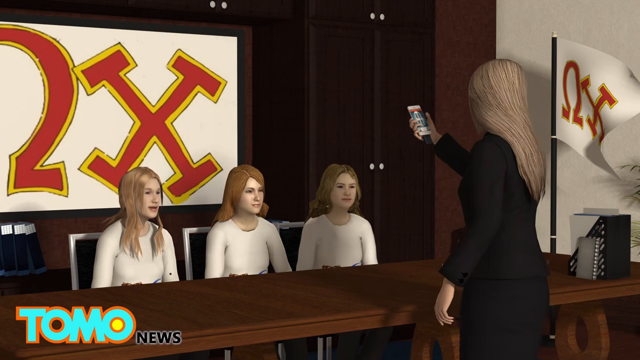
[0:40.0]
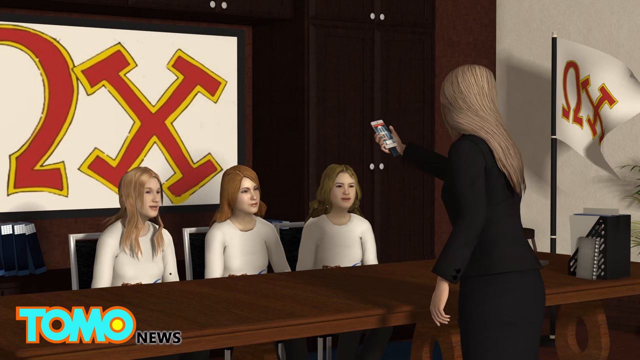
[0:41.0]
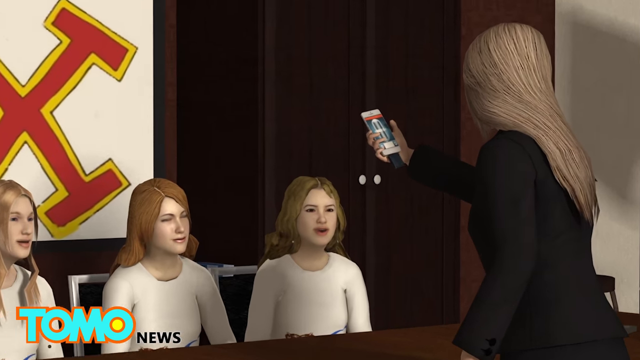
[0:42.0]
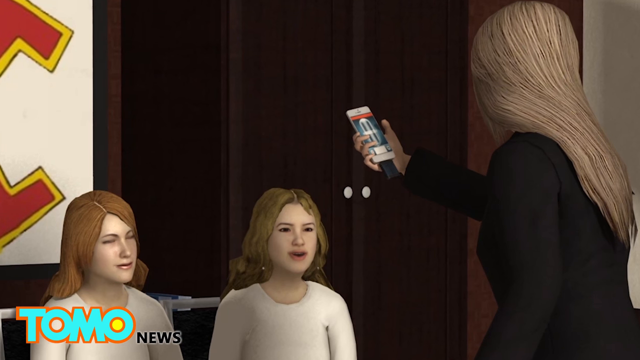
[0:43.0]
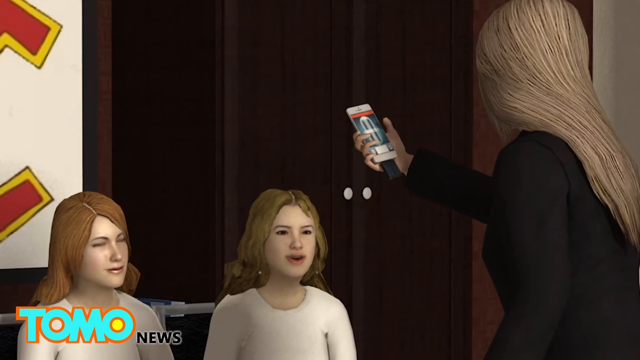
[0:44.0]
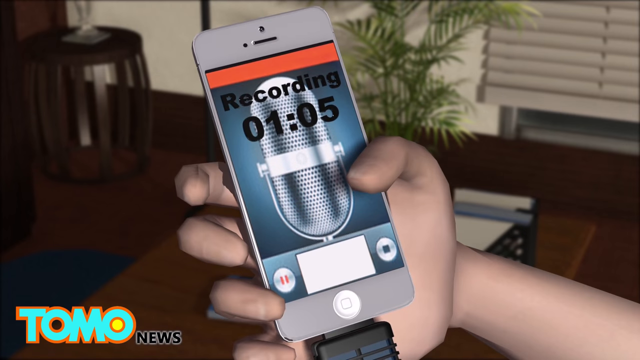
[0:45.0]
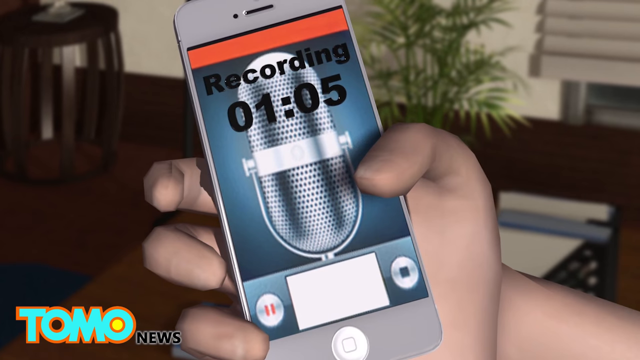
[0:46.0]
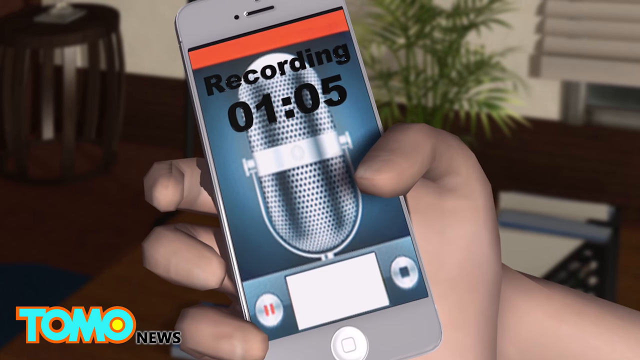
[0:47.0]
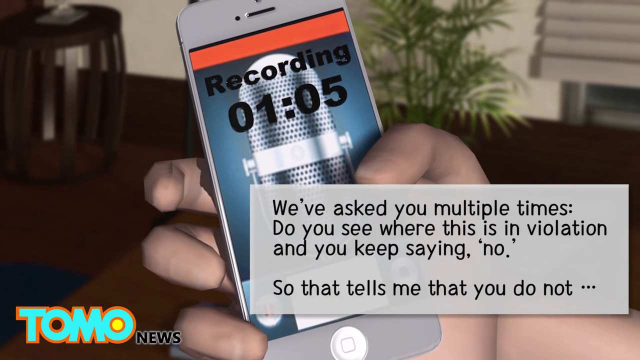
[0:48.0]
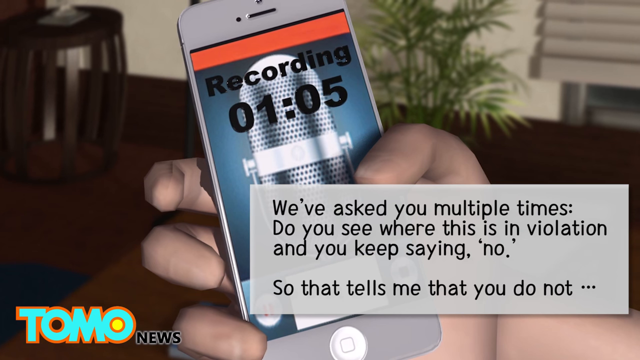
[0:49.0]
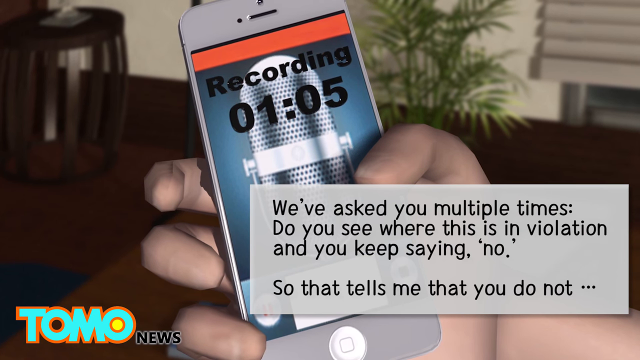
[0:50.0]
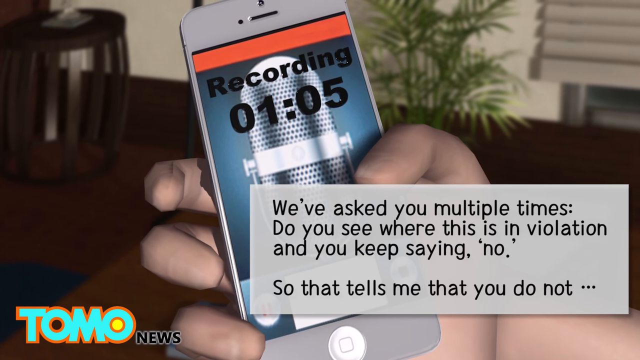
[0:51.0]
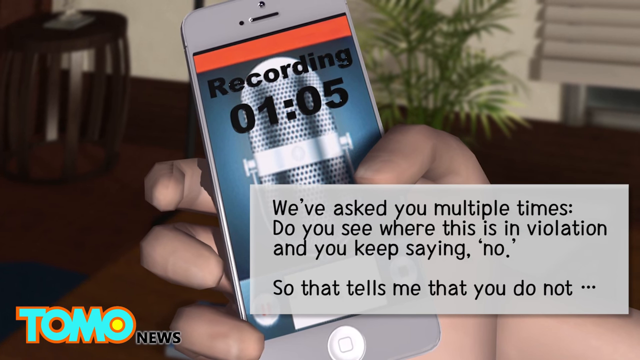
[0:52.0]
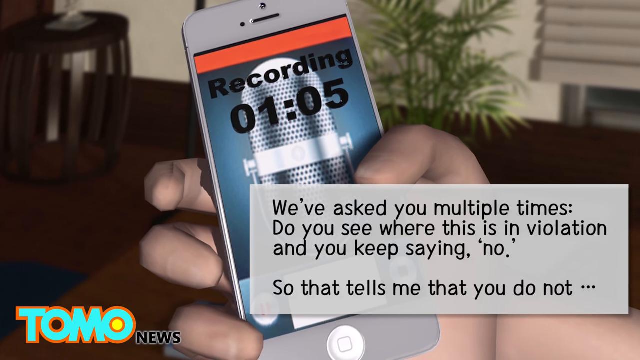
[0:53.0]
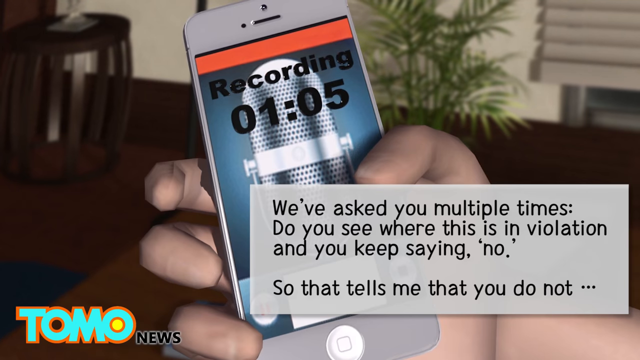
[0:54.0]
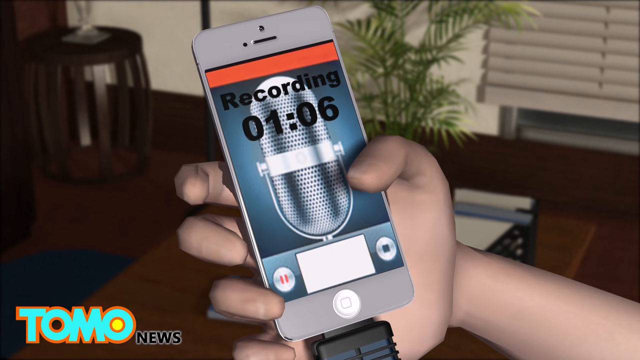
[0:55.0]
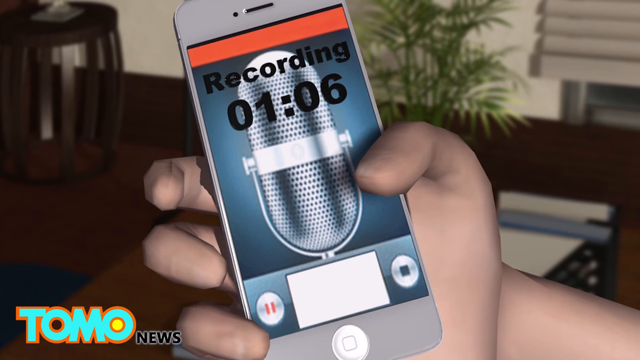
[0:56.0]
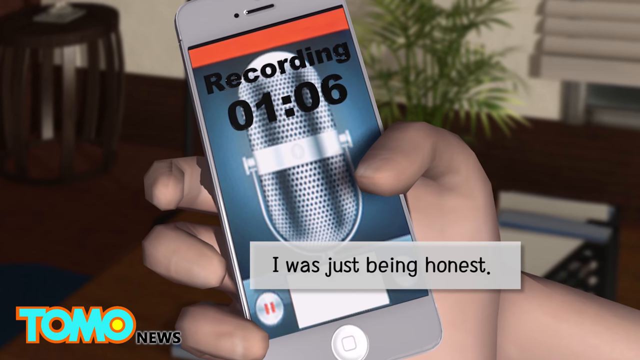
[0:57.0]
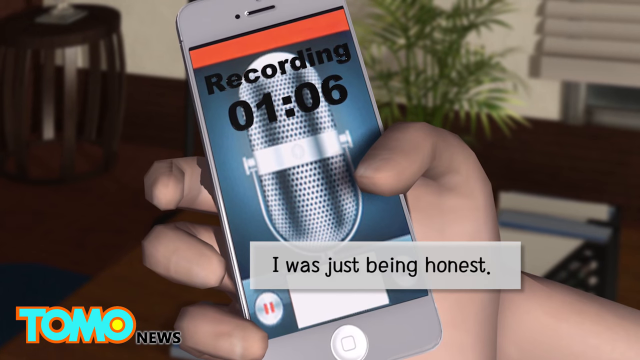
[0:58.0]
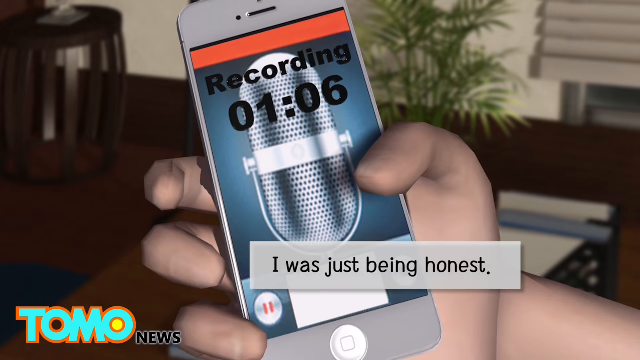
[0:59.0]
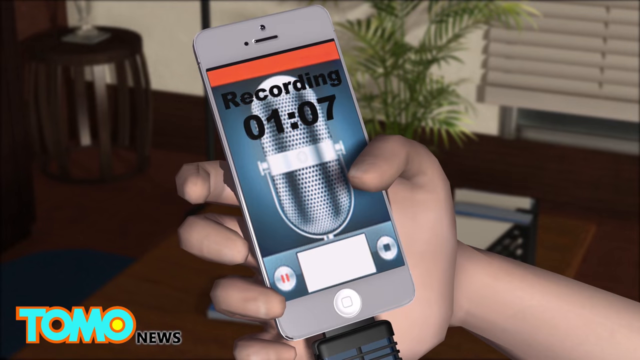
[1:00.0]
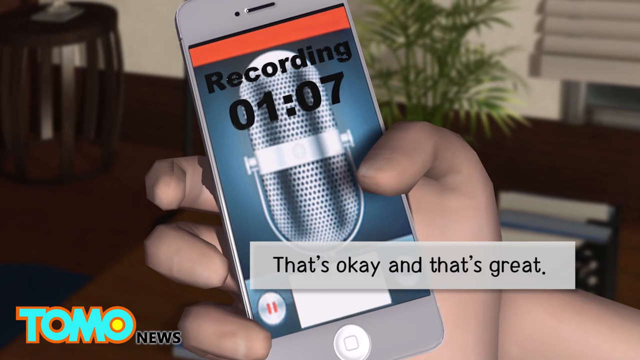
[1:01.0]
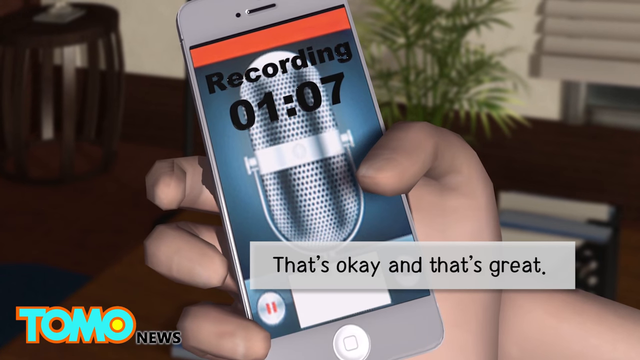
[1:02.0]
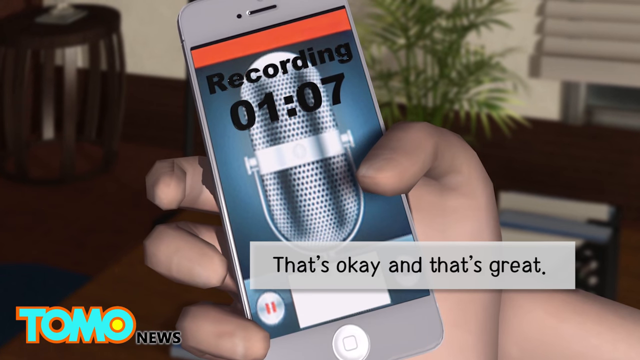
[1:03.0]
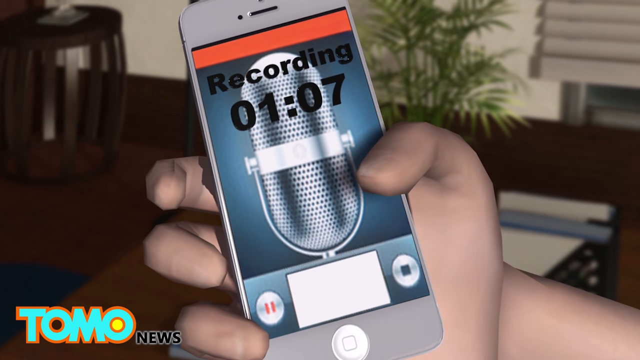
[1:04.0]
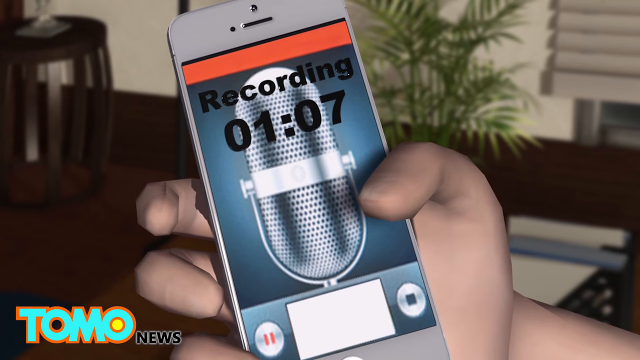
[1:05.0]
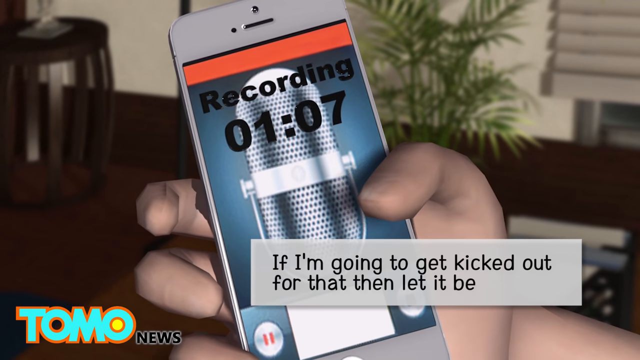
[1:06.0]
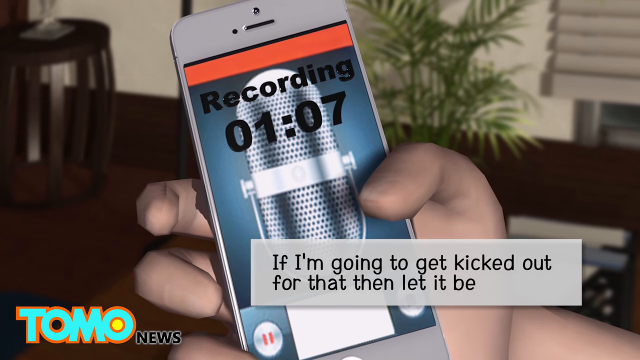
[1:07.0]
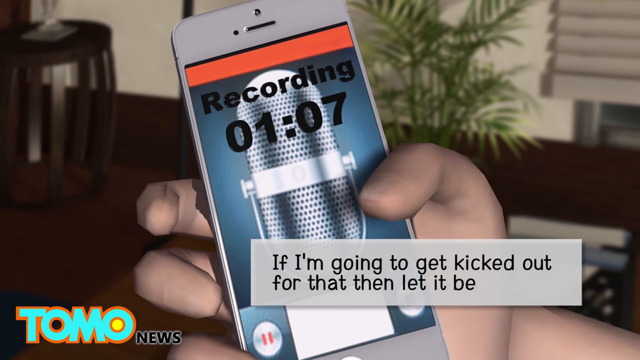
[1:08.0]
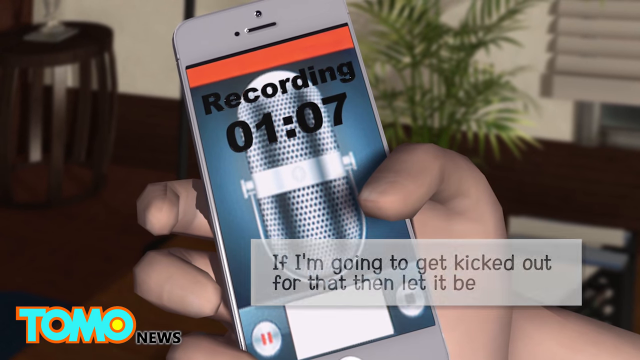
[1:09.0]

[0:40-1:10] A computer-generated cartoon shows what looks like some type of interrogation. Three young girls are seated at a large table. A female adult in a suit holds a smartphone in her right hand and is kind of bending over the girls. The view zooms in on the smartphone, which shows something like a recording button. A small text box pops up with text mentioning "you kept saying no." Several computer-generated shots follow of the right hand holding the smartphone with the recording on its screen, which appears to be about one minute long. An image of an old-timey microphone then appears, the vertical, silver-looking kind.